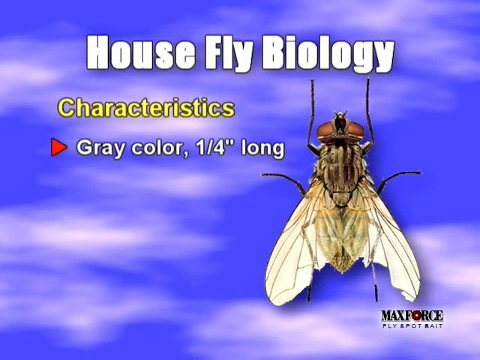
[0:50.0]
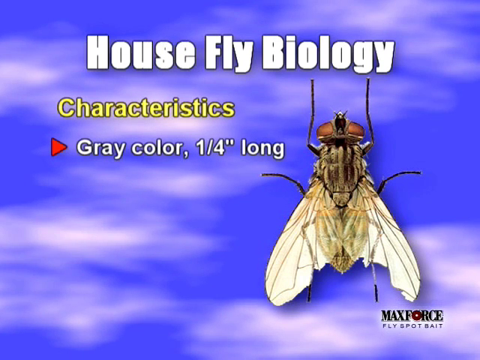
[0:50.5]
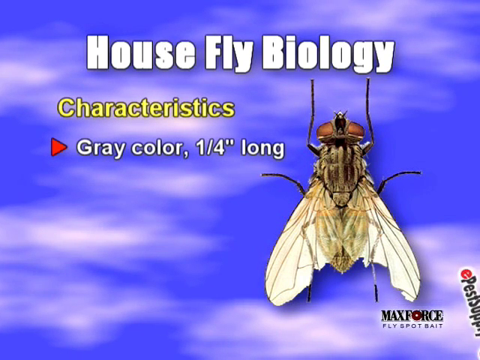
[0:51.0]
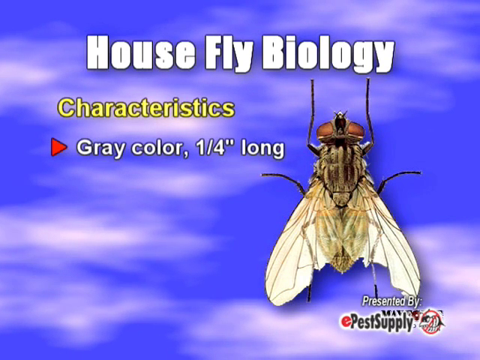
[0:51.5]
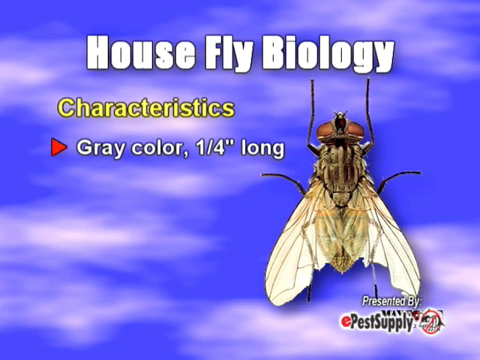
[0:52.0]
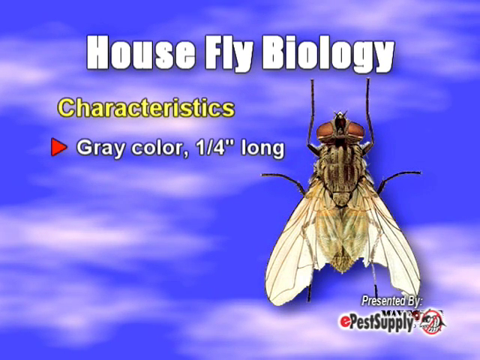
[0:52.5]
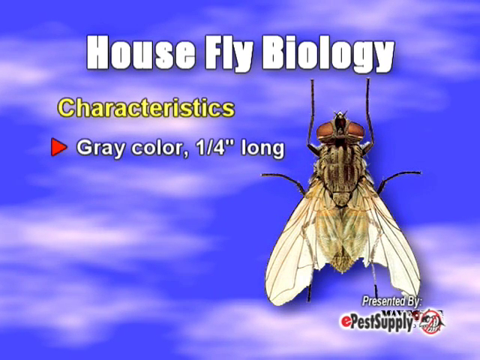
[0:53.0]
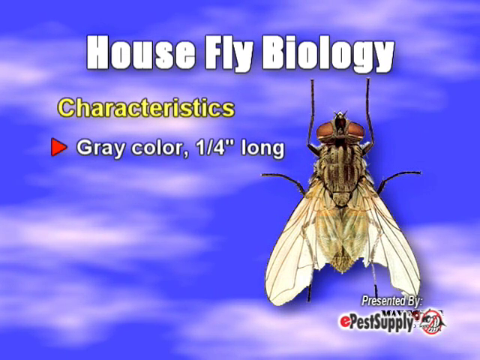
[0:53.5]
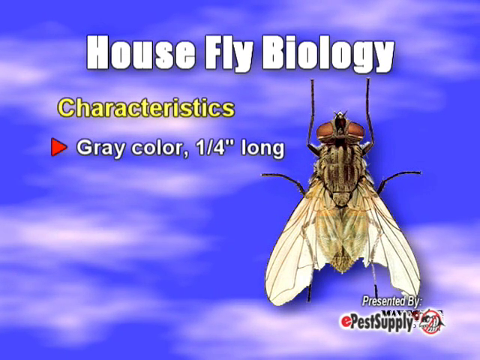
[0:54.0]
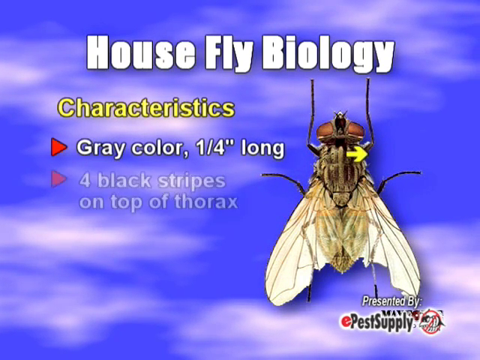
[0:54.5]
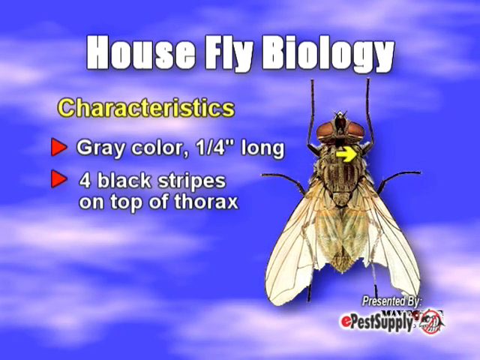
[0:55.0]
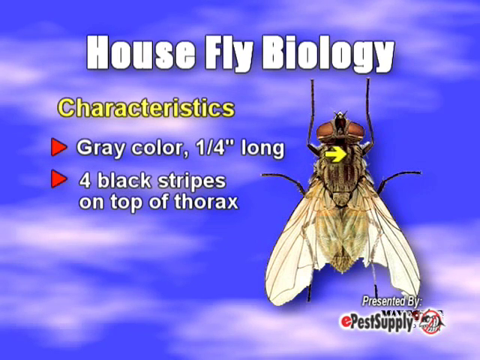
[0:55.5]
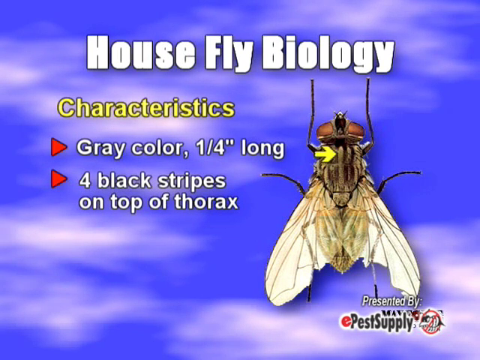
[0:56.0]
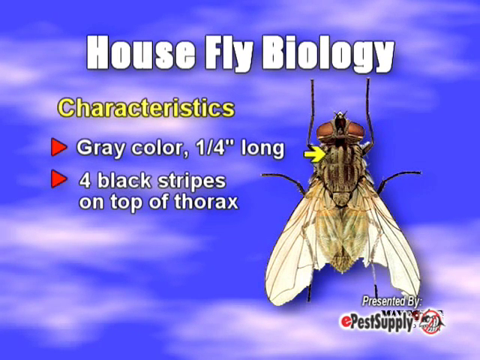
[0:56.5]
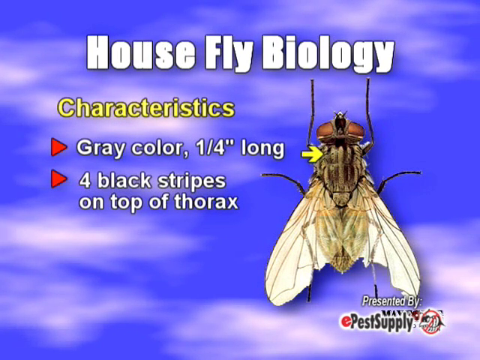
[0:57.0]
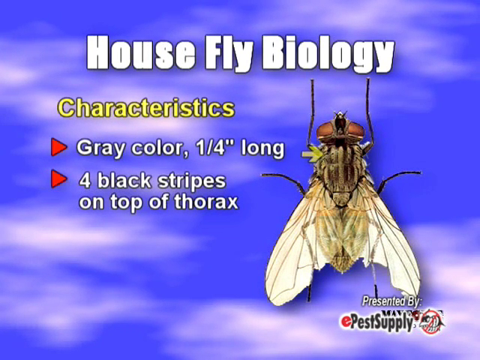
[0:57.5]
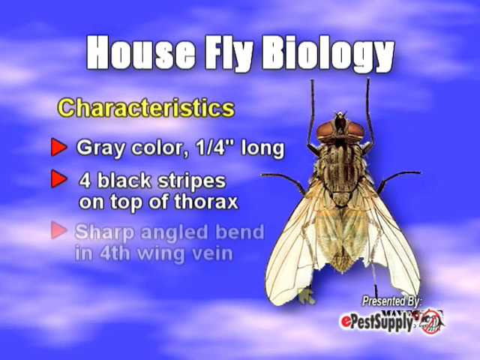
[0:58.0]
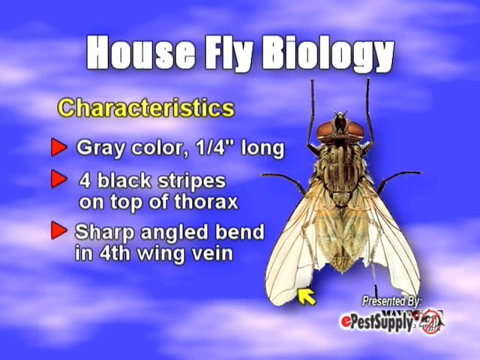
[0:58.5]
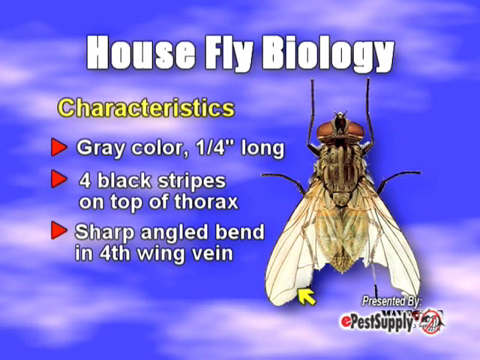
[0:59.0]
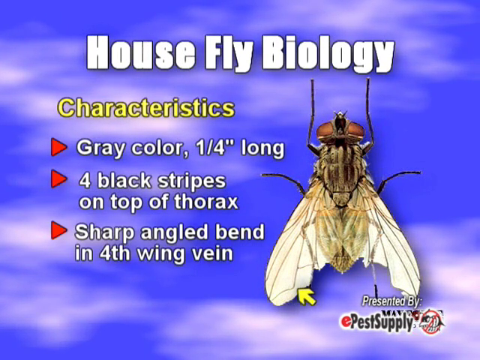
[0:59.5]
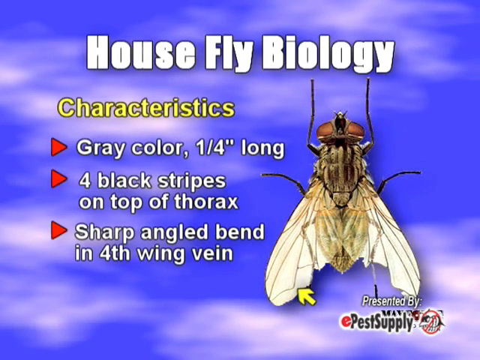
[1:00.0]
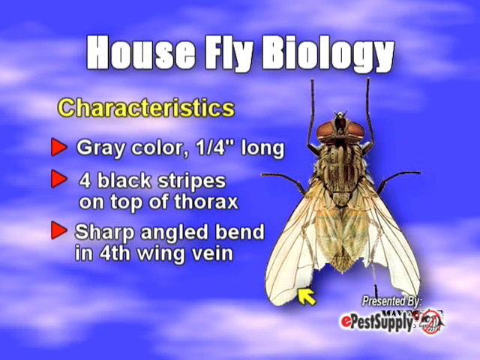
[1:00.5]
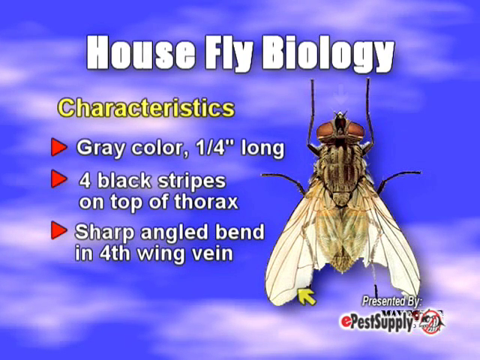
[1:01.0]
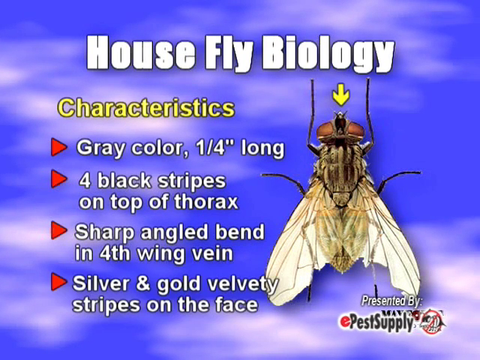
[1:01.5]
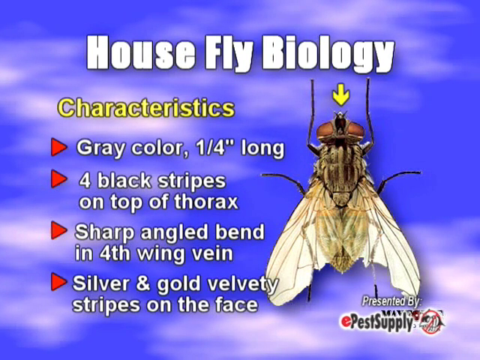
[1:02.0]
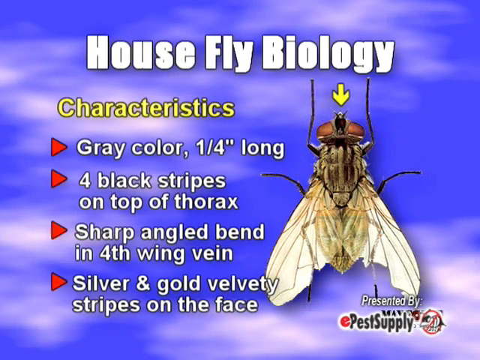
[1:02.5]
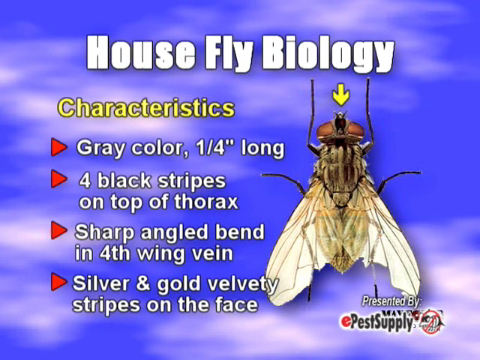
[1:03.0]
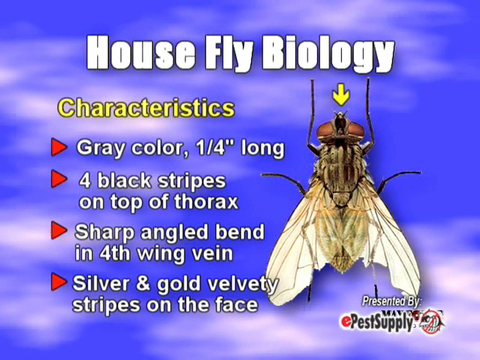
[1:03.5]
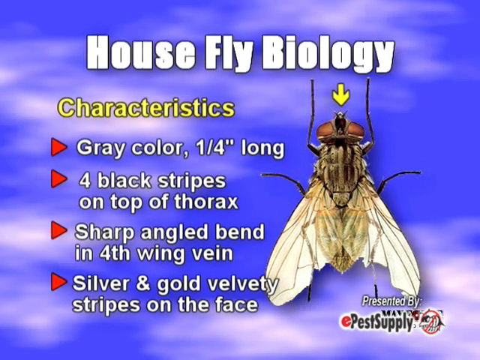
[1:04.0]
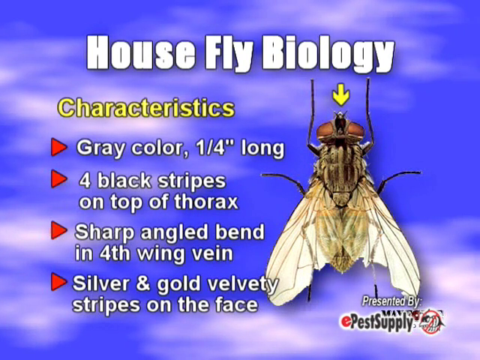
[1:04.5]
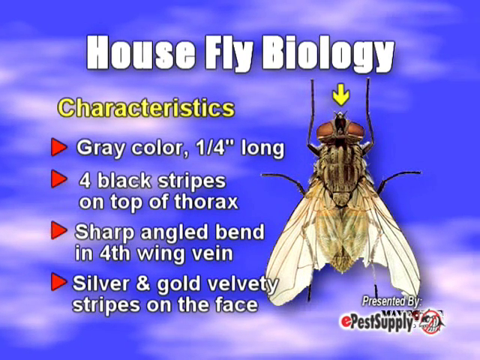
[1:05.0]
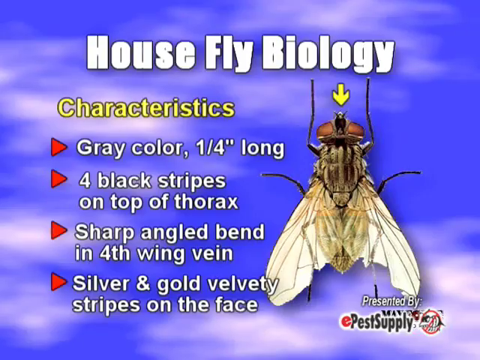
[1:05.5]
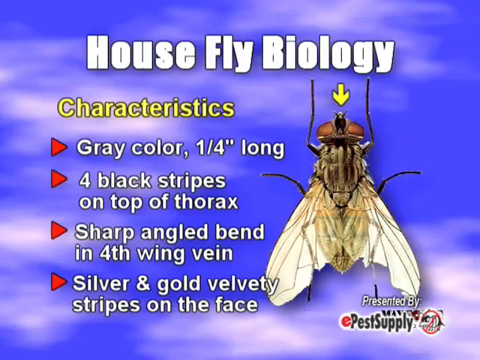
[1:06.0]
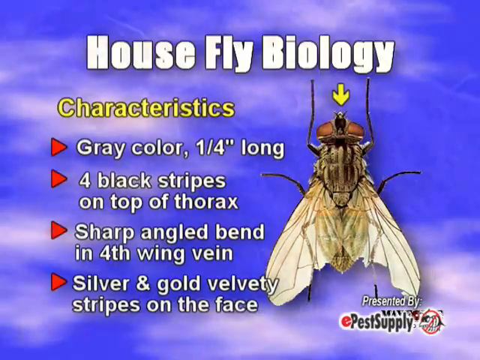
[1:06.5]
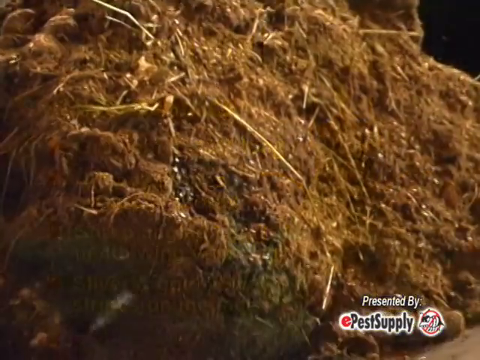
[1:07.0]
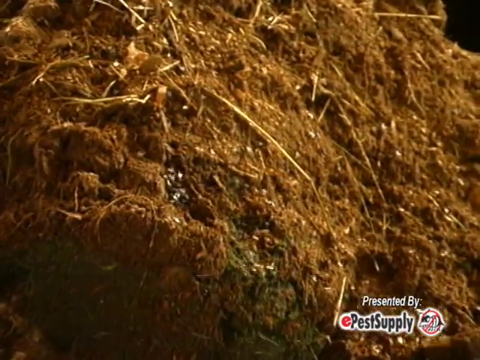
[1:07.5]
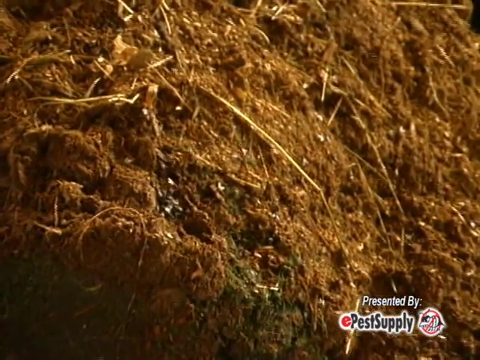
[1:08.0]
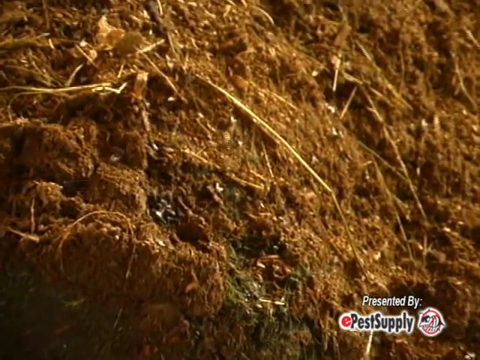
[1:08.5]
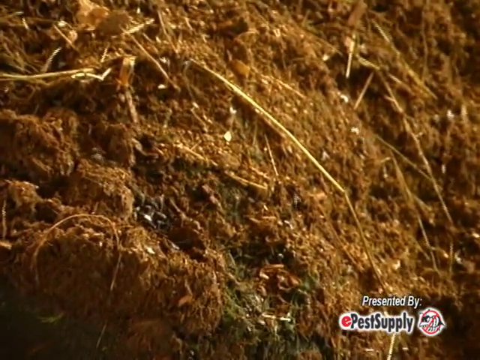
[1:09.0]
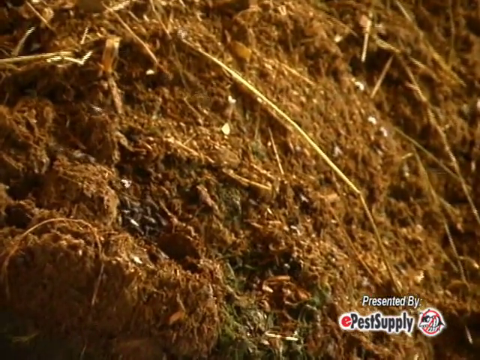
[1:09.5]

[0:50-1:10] A graphic shows a background that looks like clouds in a blue sky, with text and illustrated images appearing over it. The text at the top reads "House Fly Biology." Below it says "Characteristics," and characteristics of the housefly appear one at a time as bulleted items: gray color, a quarter of an inch long, four black stripes on top of the thorax, a sharp angled bend in the fourth wing vein, and silver and gold velvety stripes on the face. Next to the list is an illustration of a housefly, and as each item appears, a small yellow arrow points to that characteristic on the illustration. At the bottom right of the screen it says "Presented by ePestSupply." Then a close-up shows what looks like a mound of dirt with dozens of flies crawling around on top.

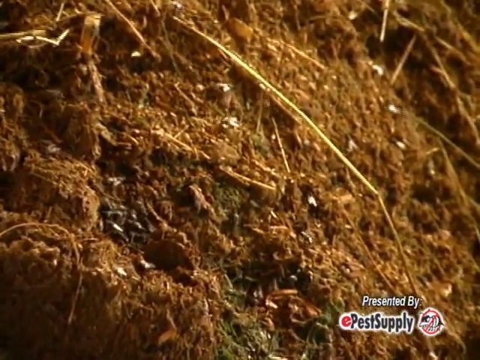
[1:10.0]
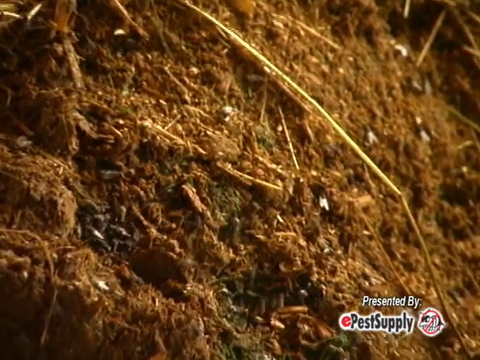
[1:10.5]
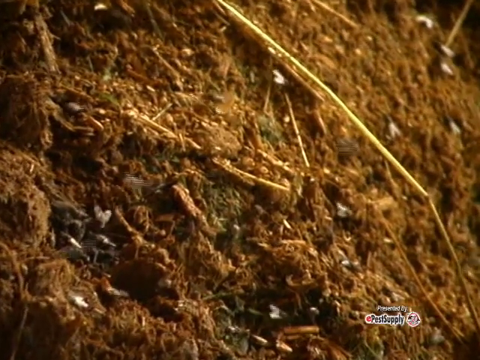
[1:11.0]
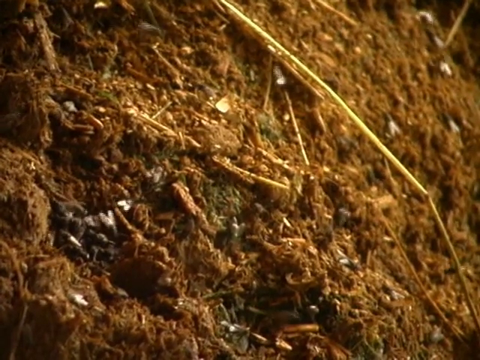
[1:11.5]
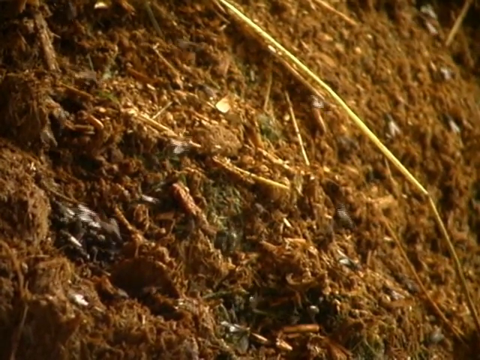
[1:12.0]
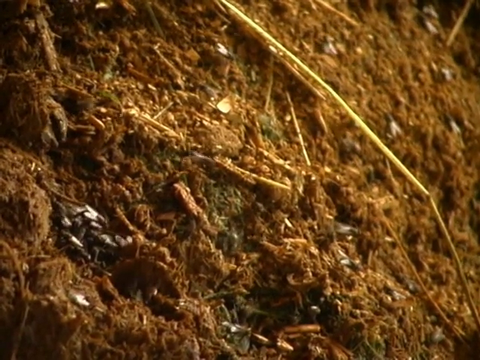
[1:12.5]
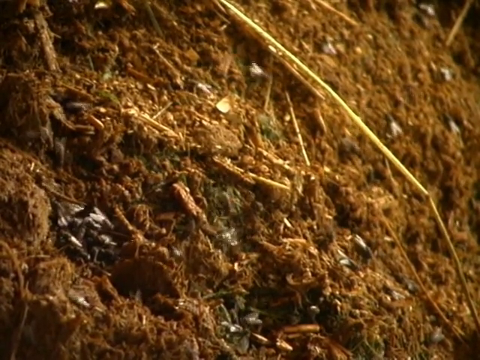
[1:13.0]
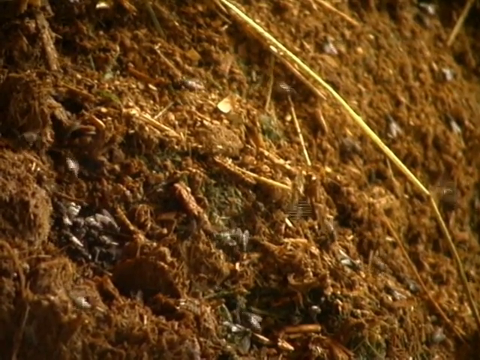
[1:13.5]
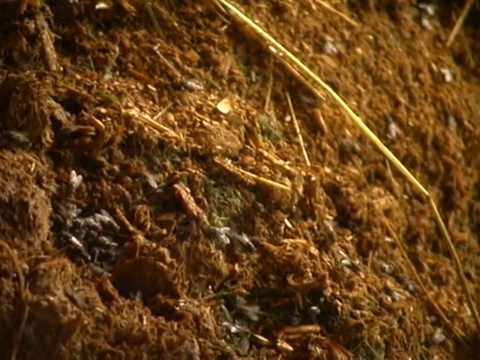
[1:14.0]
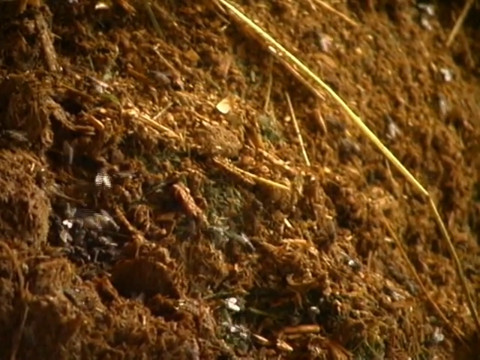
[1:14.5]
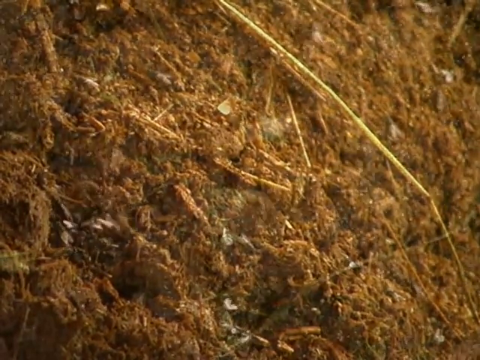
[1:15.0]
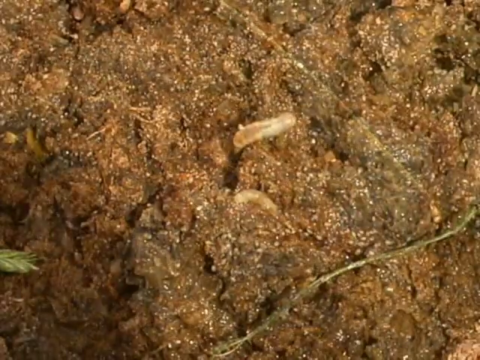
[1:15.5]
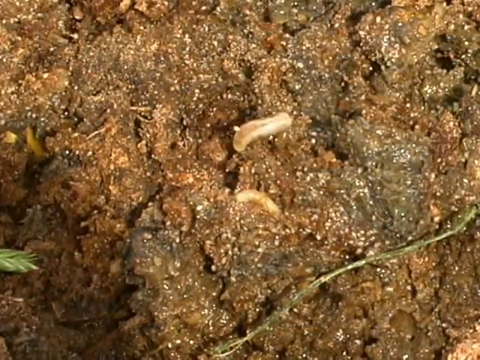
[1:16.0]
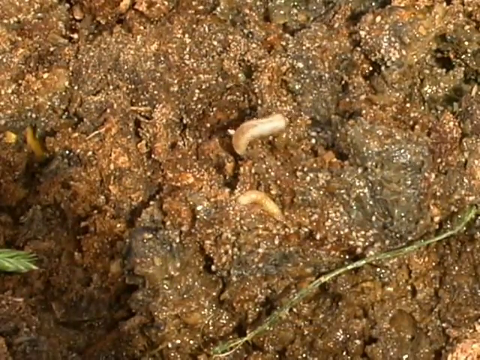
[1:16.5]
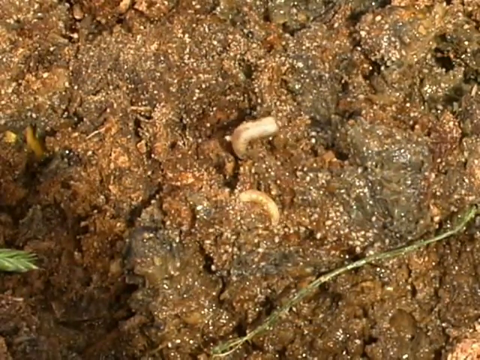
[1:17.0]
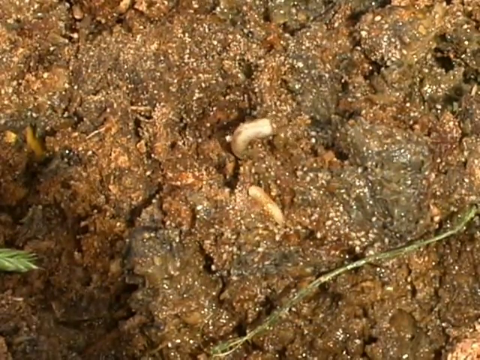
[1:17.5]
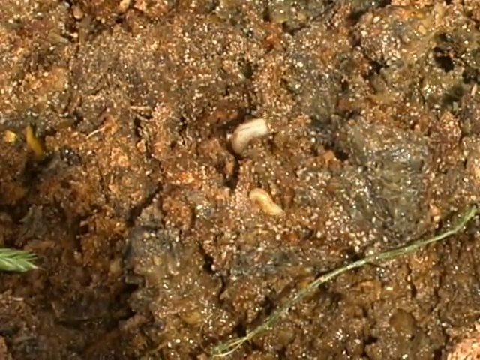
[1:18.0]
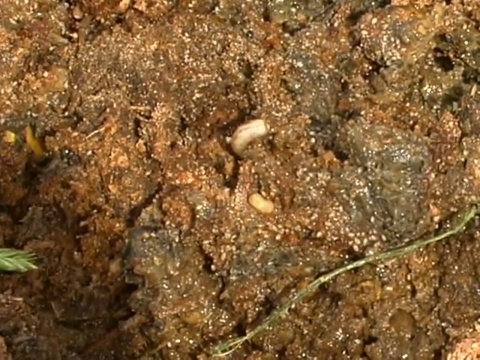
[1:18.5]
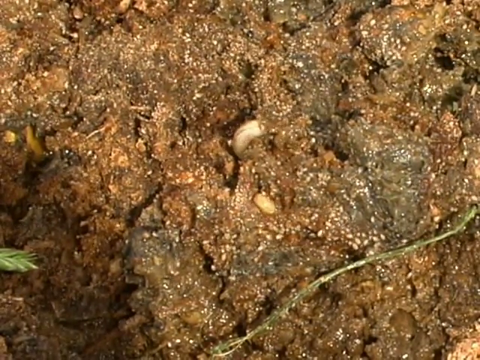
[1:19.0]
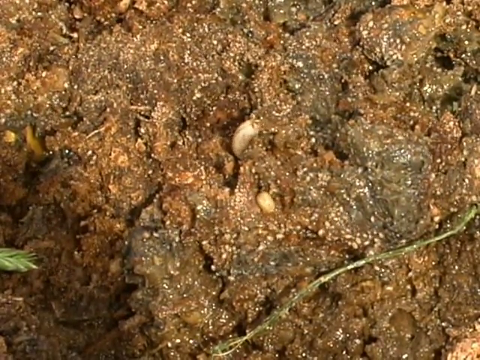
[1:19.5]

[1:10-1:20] A graphic in the lower right corner says "presented by ePestSupply," with a red line striking through an illustrated bug. The footage shows what looks like a mound of dirt or hay covered in flies, which are flying around it and crawling on top of it. Next comes what looks like a clump of soil with white maggots burrowing into it. At least two maggots are visible, and the dirt around them appears to be packed fairly tightly and cracked.